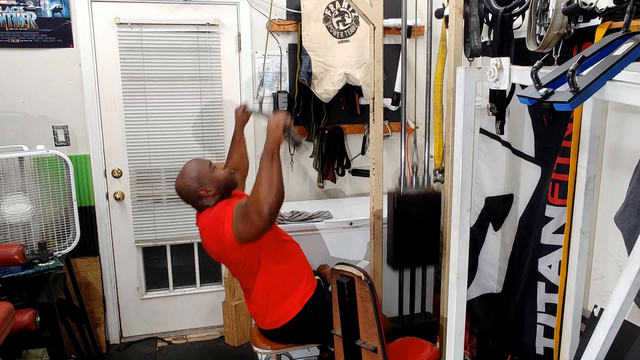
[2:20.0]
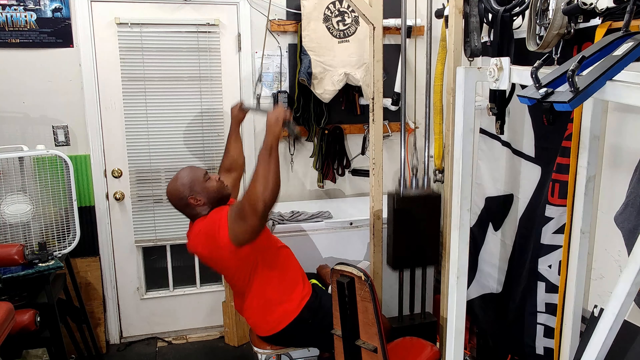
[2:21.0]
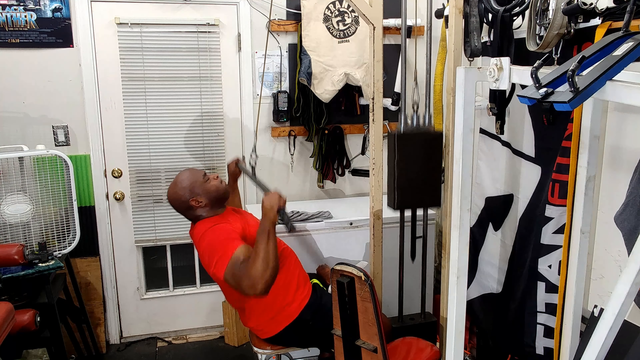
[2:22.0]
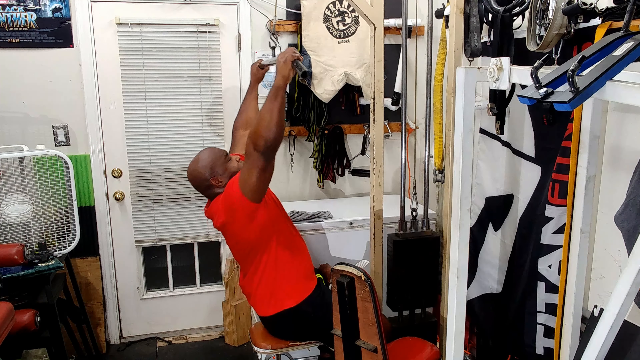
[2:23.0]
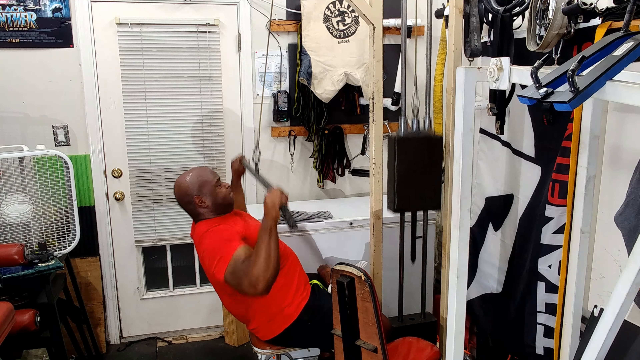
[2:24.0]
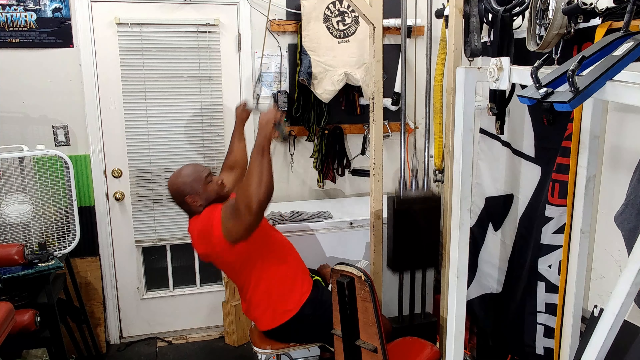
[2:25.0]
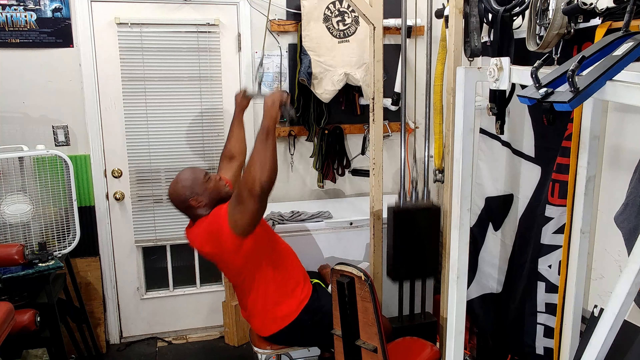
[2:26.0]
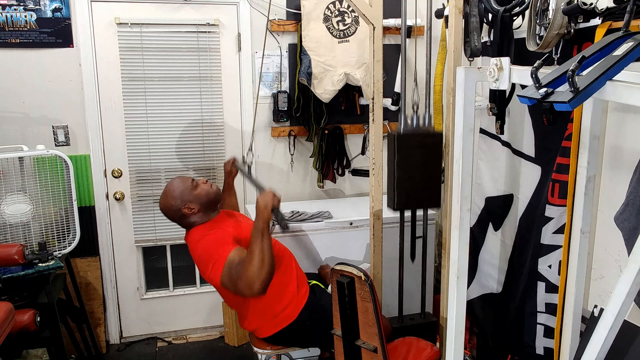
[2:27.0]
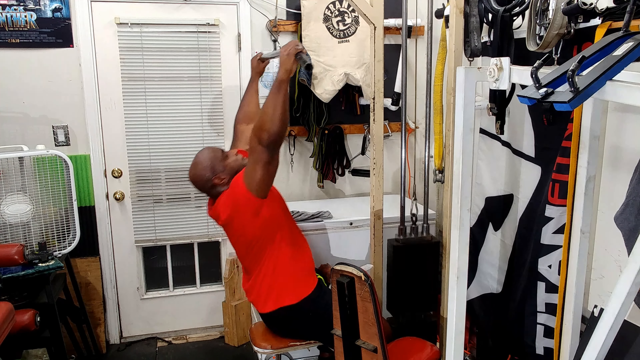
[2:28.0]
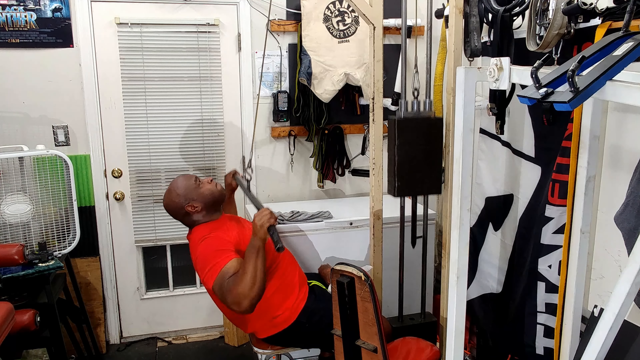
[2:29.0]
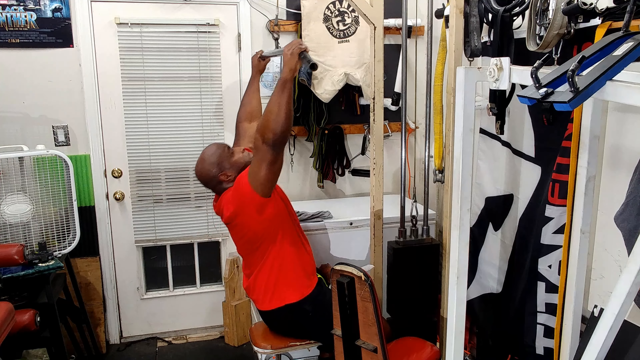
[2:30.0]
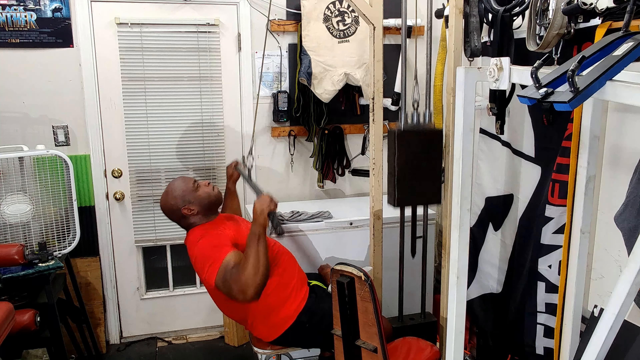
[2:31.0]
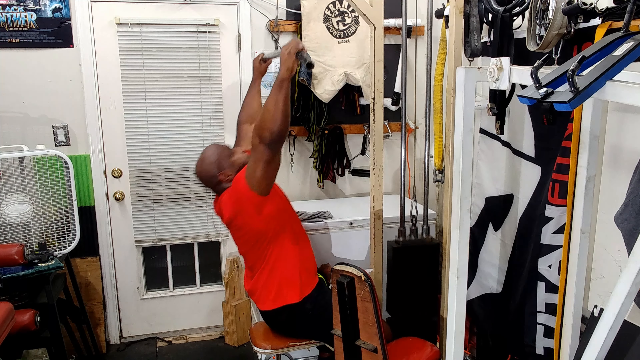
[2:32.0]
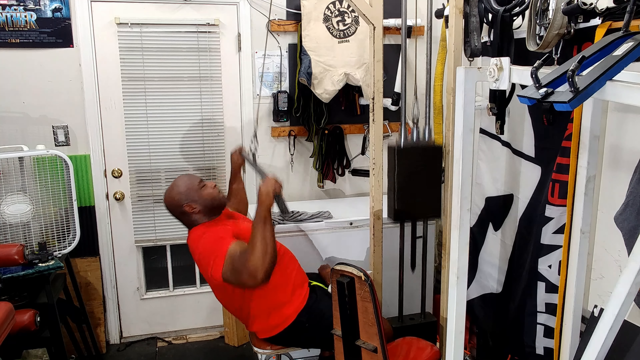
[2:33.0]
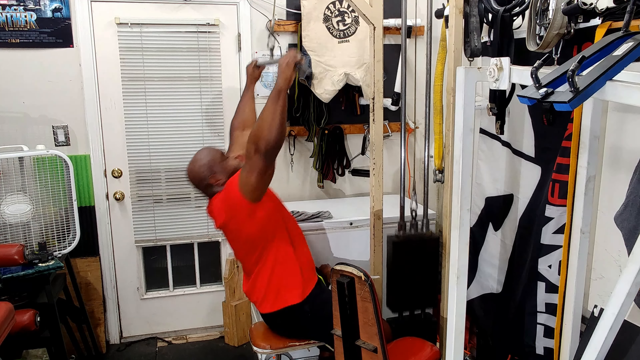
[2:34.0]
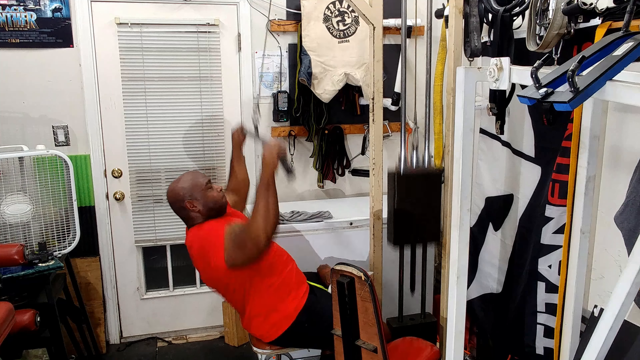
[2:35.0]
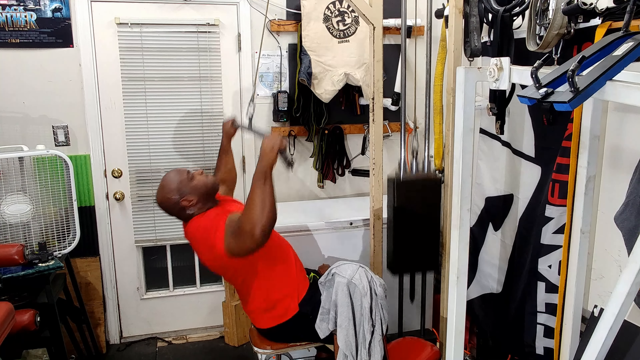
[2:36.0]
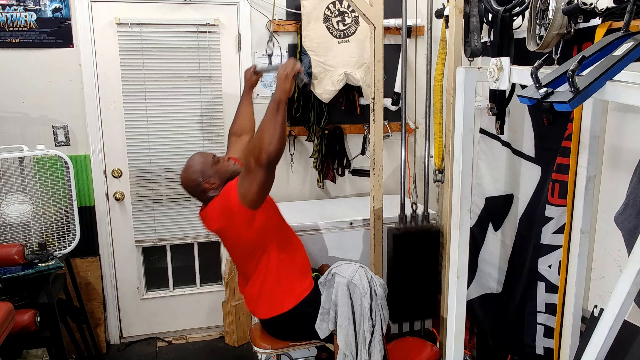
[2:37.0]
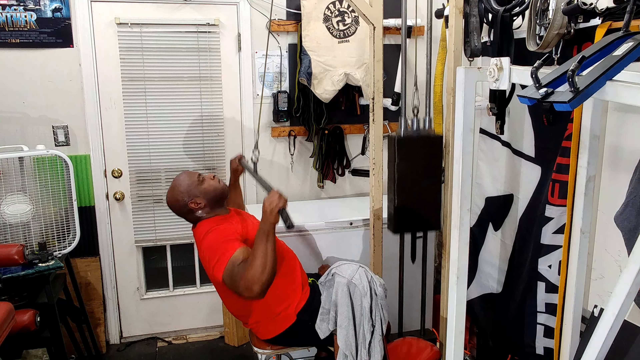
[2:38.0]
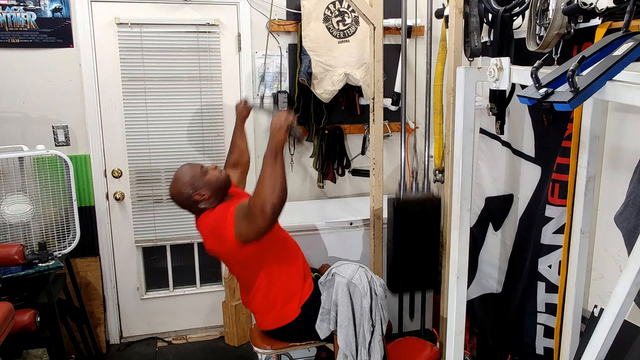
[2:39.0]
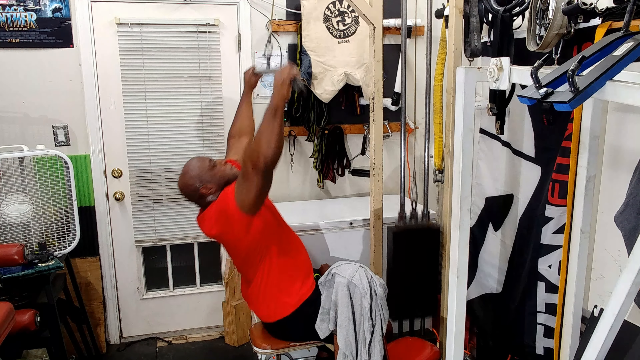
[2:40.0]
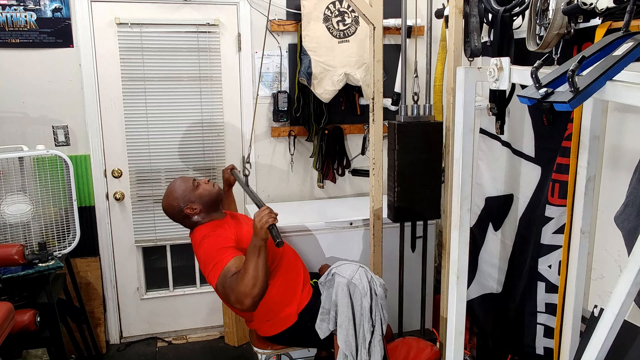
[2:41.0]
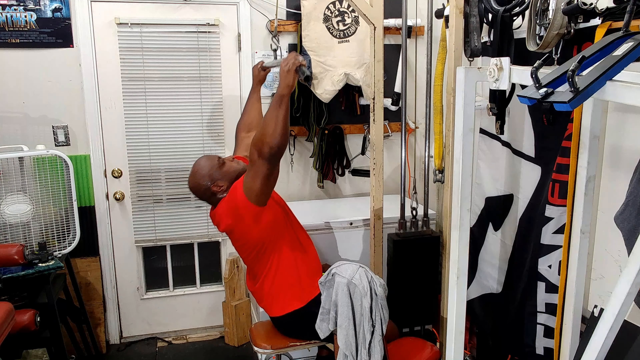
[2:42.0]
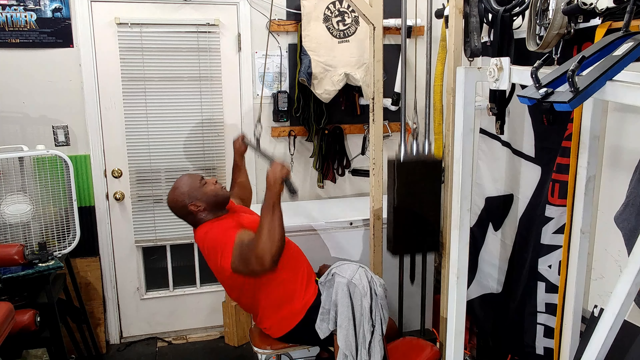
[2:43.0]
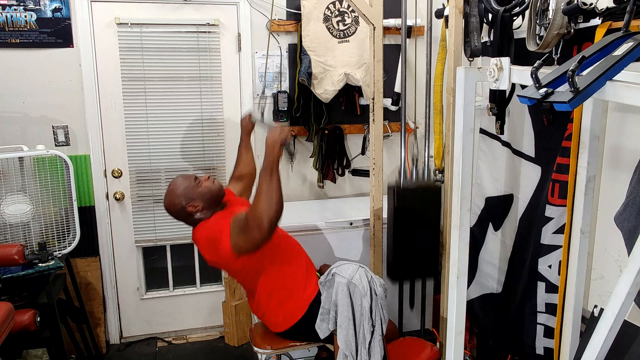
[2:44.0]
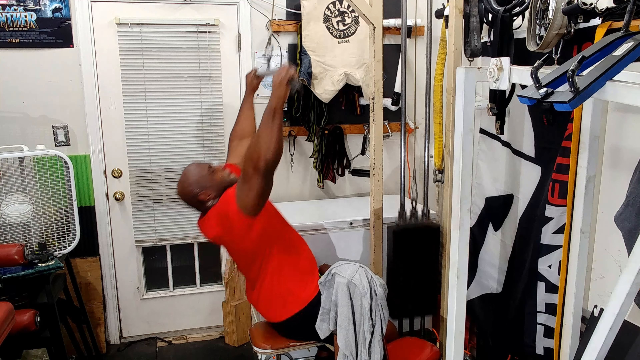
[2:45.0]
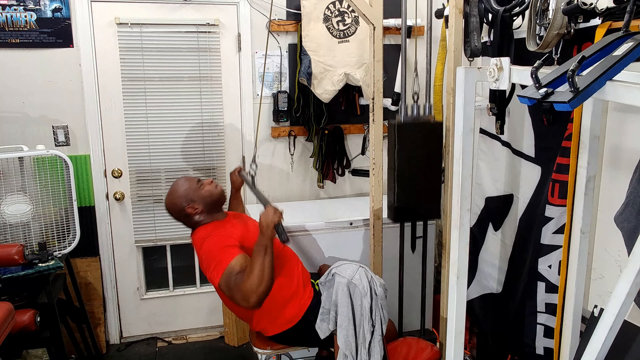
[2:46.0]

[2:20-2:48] The man pulls the handlebars down to his chest. He is in a different part of the room, which almost looks like the back area, with a door with blinds visible. He is sitting in a chair, and as he pulls down, the weights on the machine rise. He is seen from a side angle, so only the side of his face is visible, and he strains, pulling his mouth tight together. He is a thick person with a muscular build, and his arms bulge as he pulls the handle, which is connected to a string that lifts the weights, bringing it down to his chest each time with visible effort.